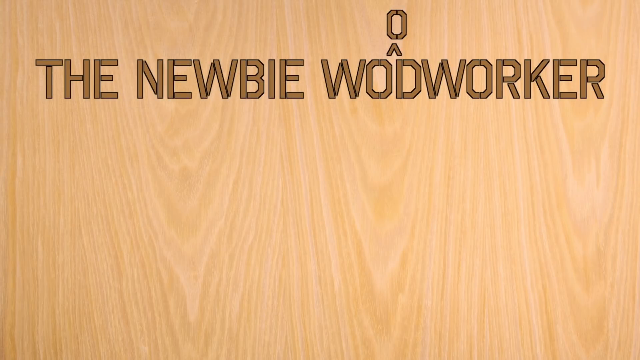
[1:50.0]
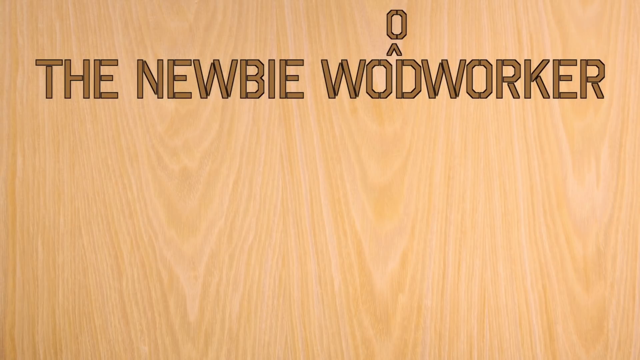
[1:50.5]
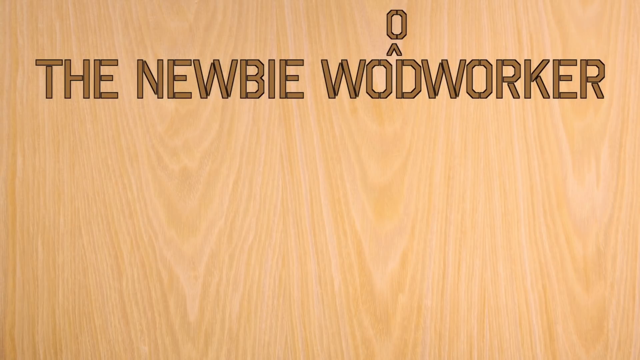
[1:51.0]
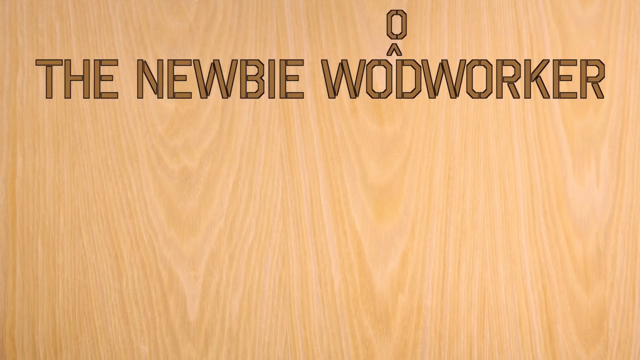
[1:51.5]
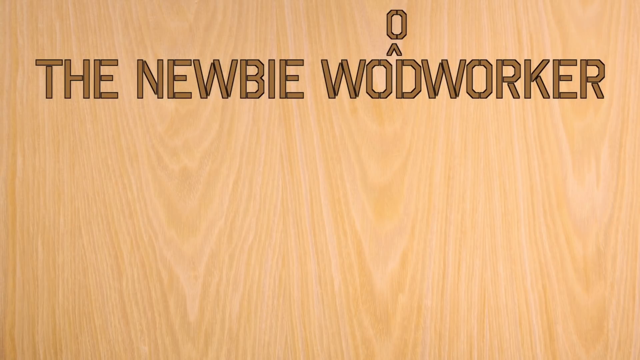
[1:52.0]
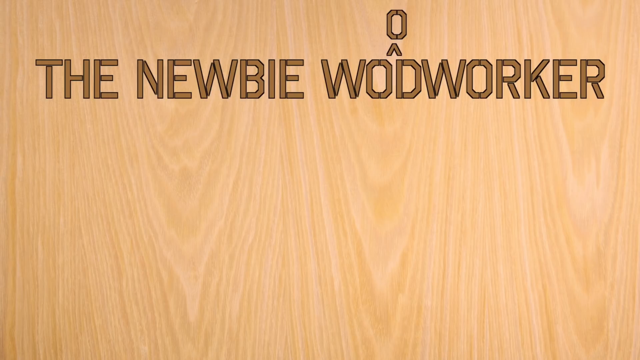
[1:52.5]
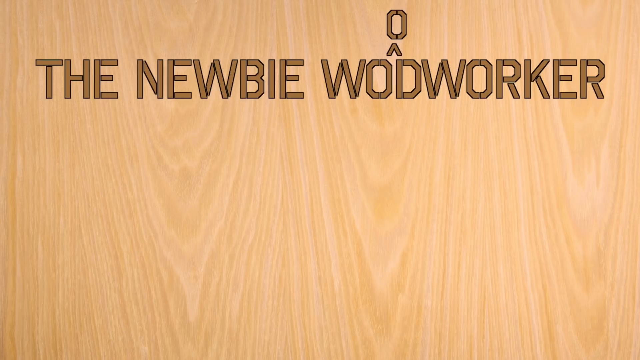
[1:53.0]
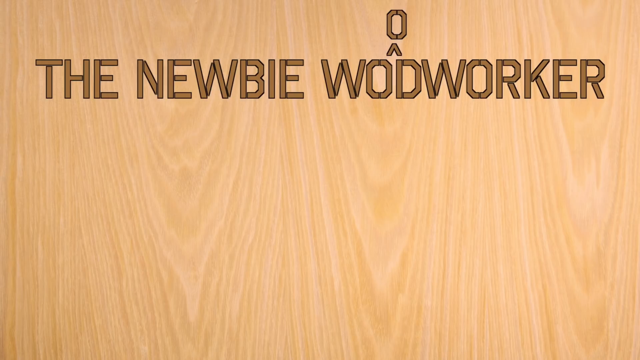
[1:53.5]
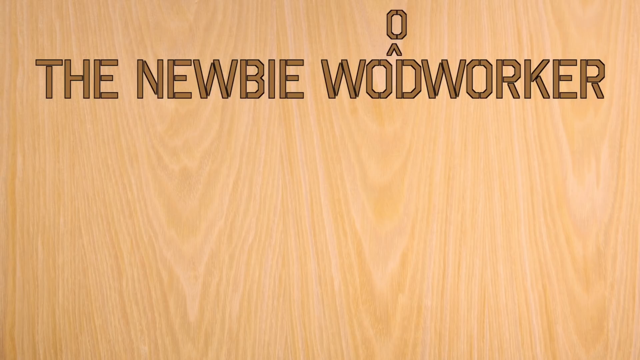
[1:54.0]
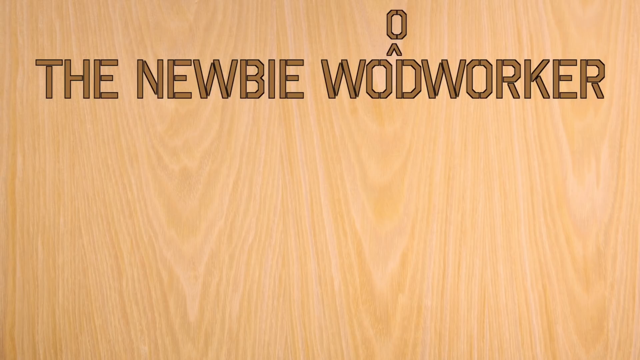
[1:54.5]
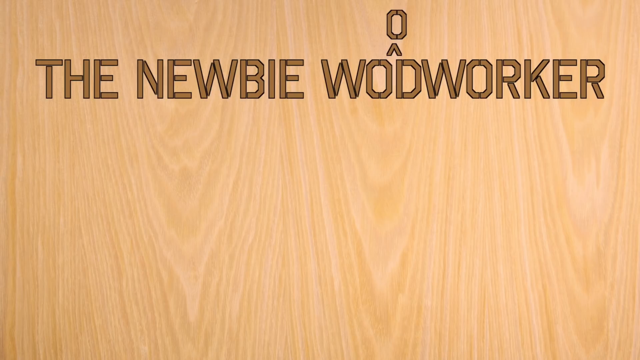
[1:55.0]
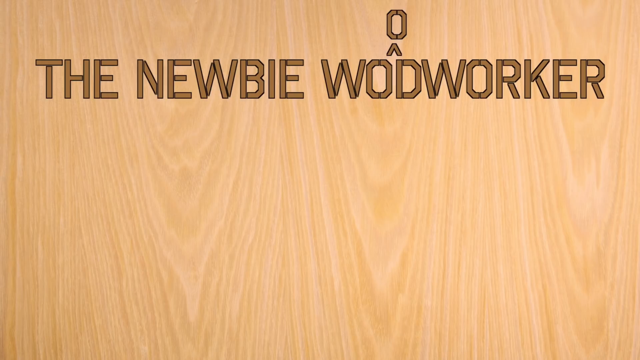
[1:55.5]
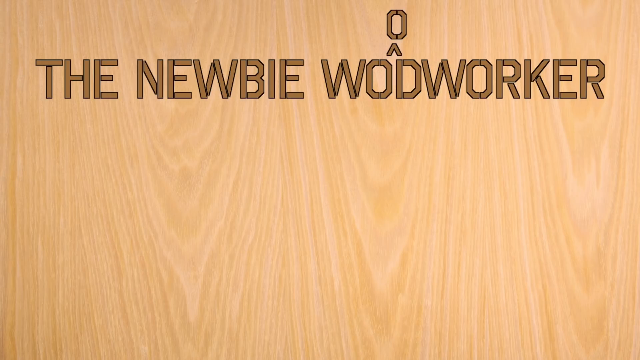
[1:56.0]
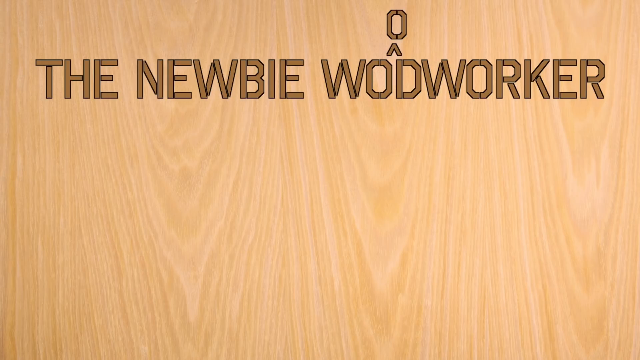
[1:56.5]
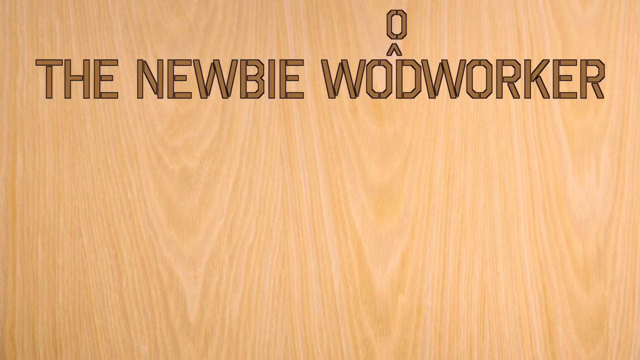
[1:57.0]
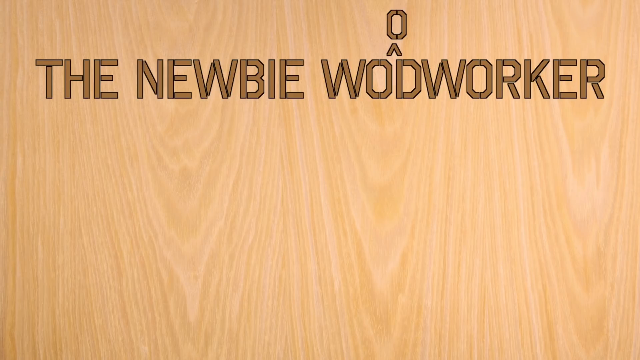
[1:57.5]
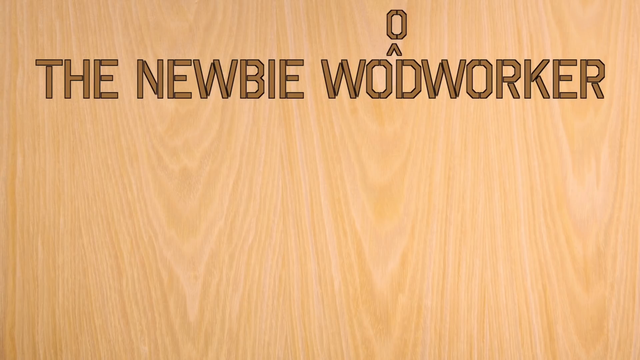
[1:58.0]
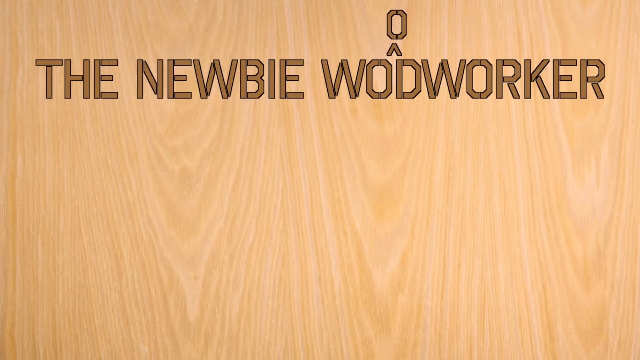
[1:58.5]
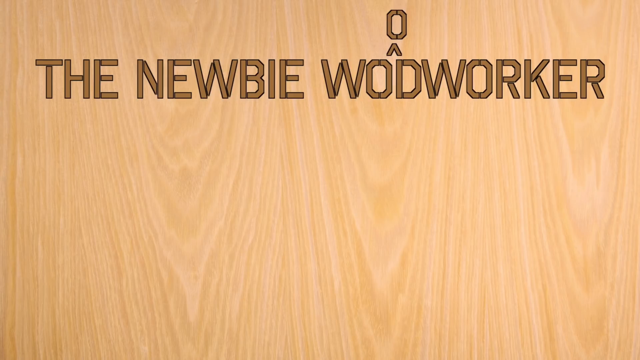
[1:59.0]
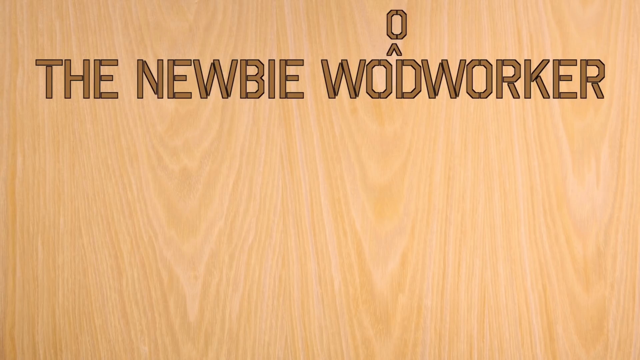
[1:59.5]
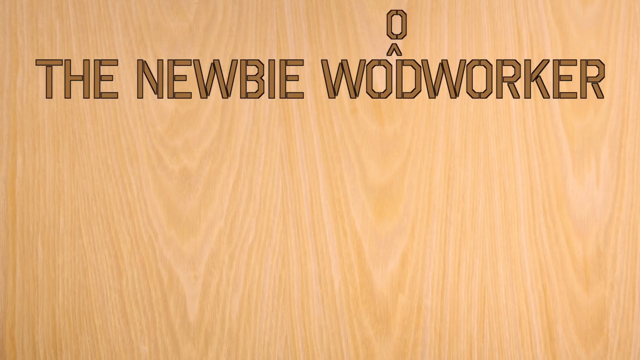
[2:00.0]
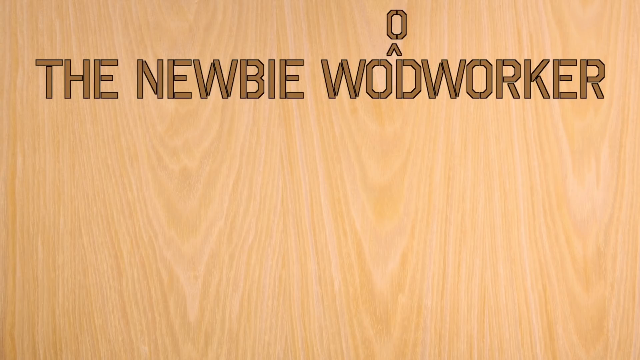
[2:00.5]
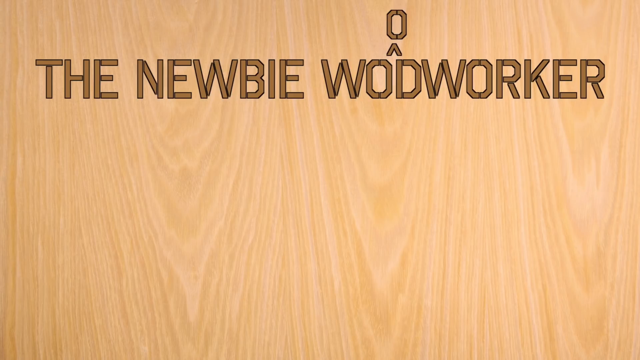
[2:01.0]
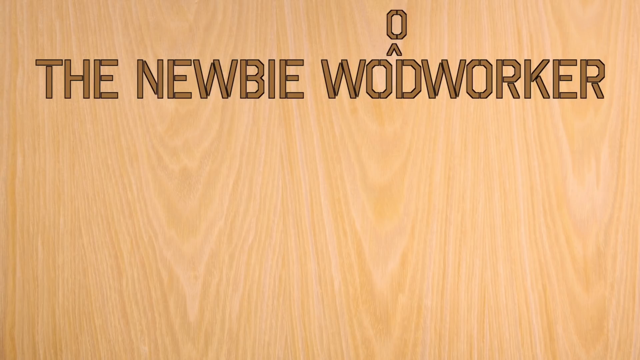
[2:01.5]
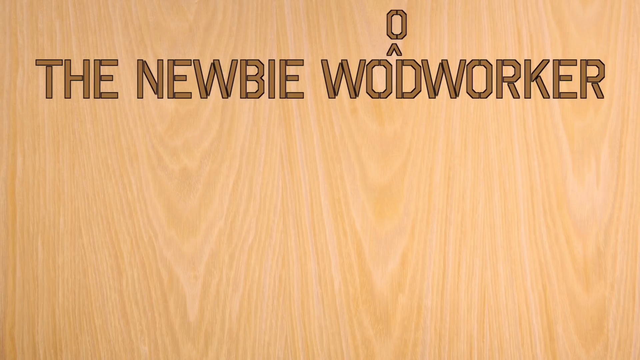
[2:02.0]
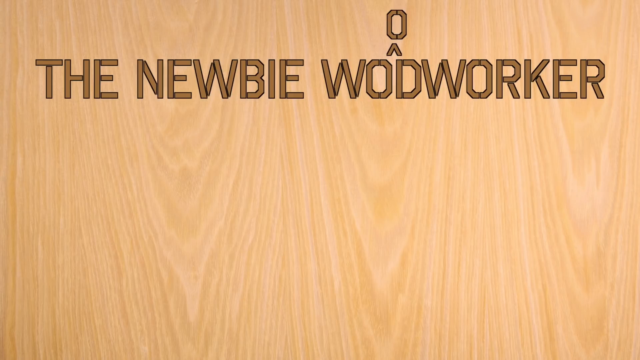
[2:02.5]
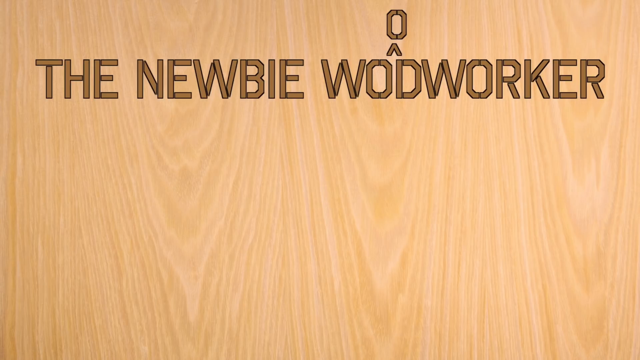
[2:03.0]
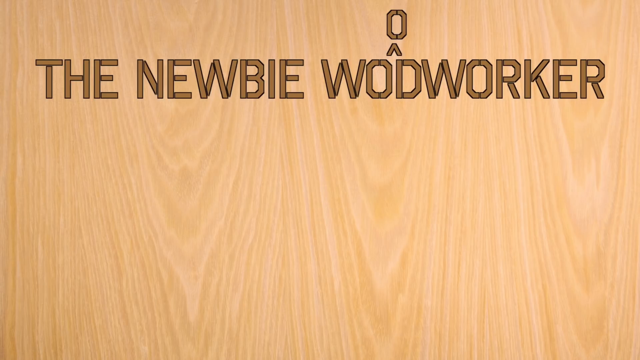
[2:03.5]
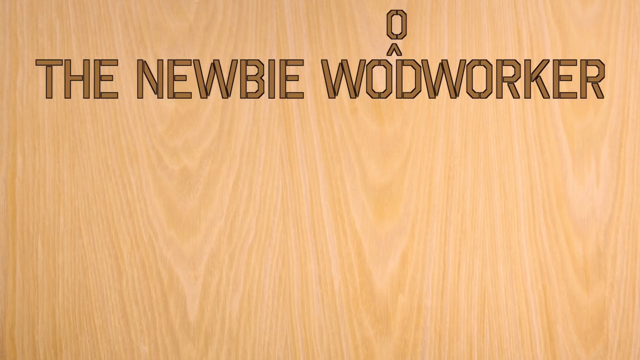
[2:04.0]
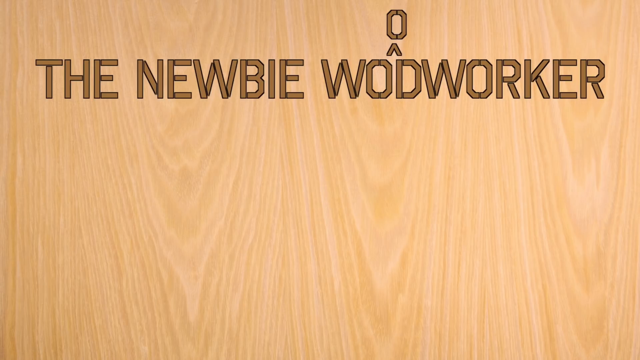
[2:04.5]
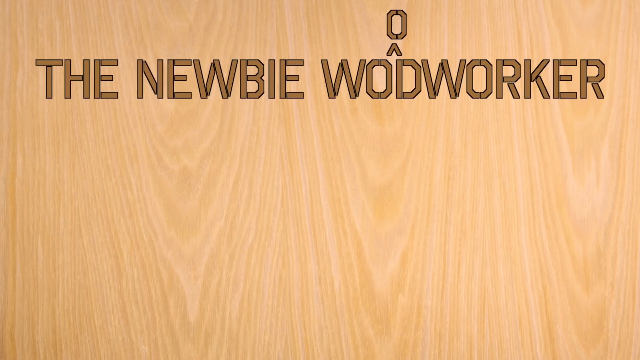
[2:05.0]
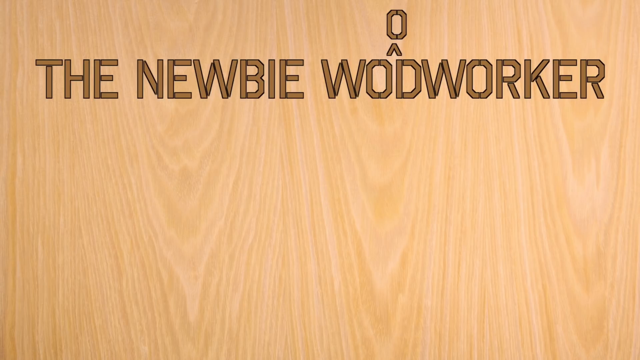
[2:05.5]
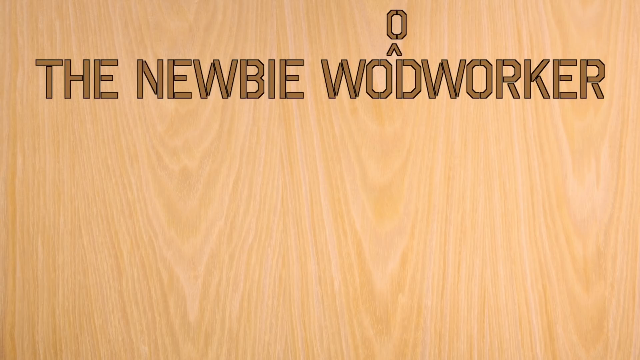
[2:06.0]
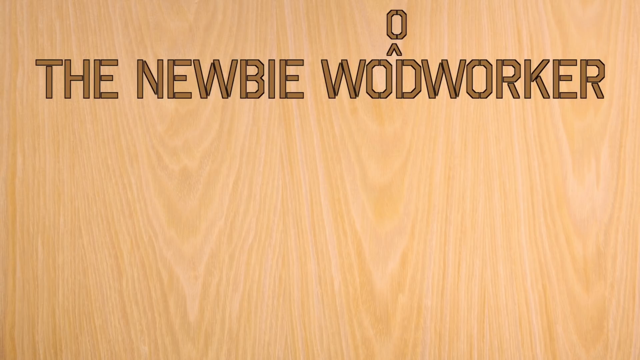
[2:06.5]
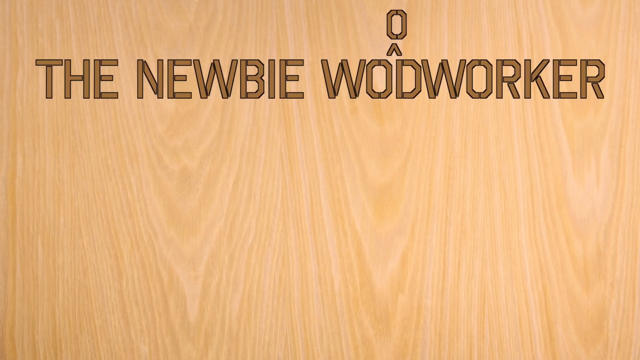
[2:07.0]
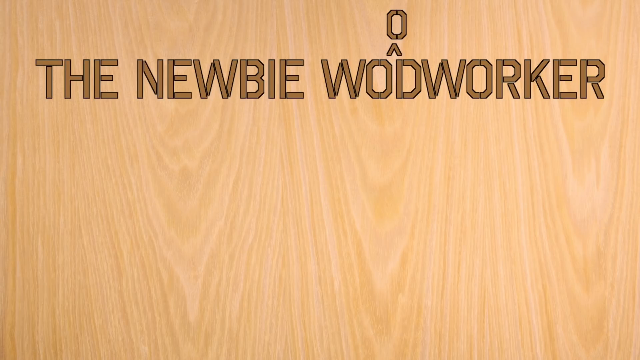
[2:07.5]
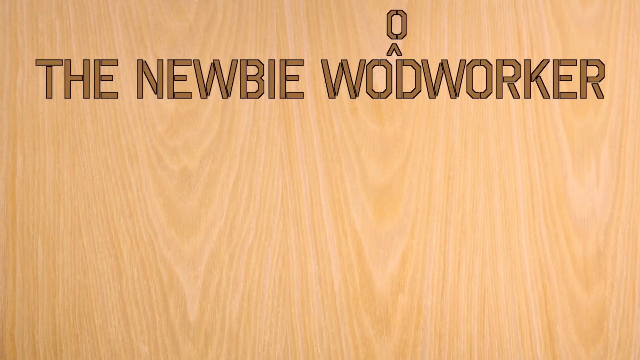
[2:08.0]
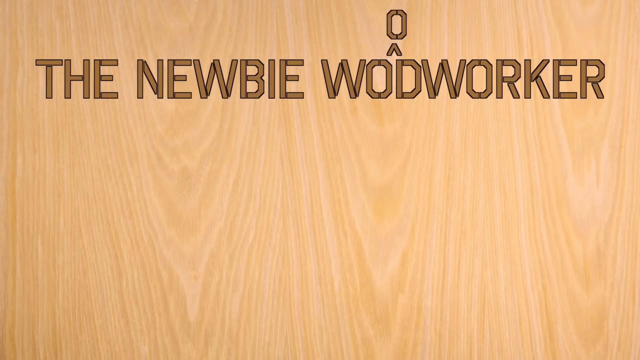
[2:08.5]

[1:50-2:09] The background is once again blonde wood with slightly darker wood grain throughout. The text "The Newbie WOODWORKER" is across the top of the screen in all caps, in stylized lumber lettering, with a cute insert for the missing second O in "woodworker." The screen does not change, and the camera holds steady with no movement at all.